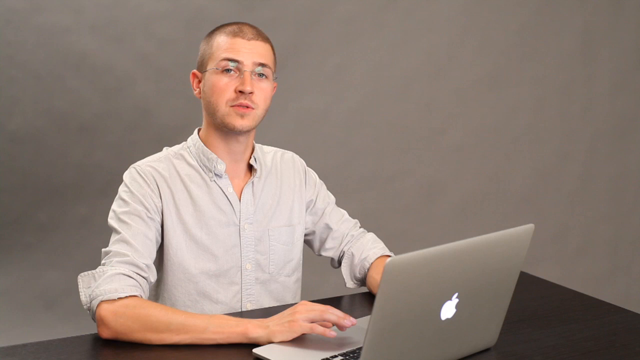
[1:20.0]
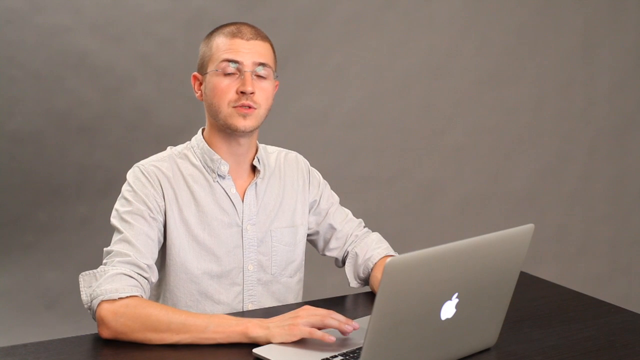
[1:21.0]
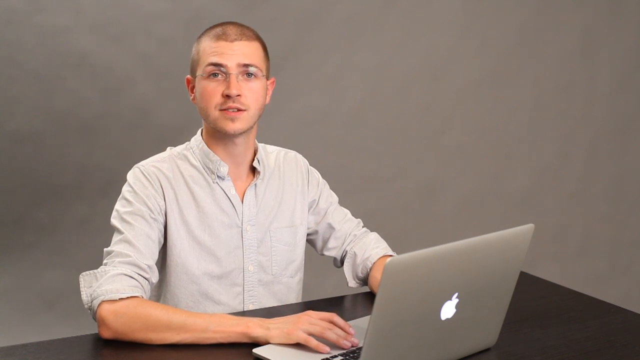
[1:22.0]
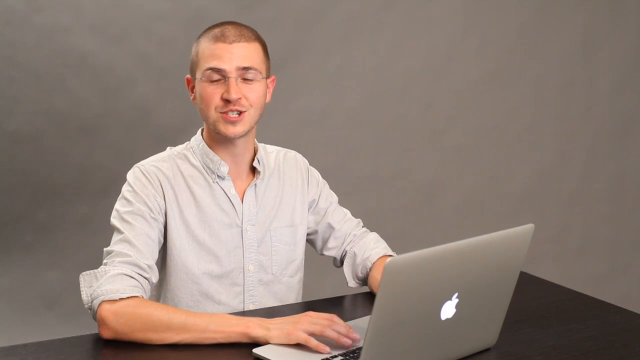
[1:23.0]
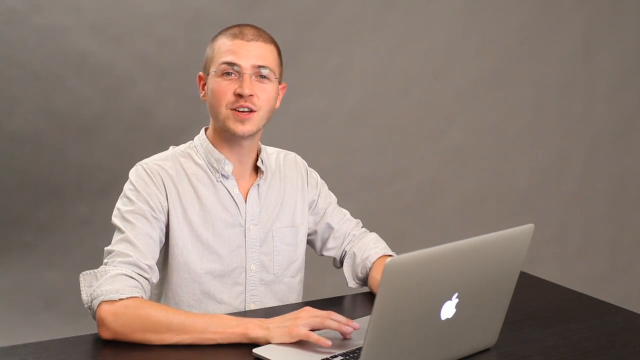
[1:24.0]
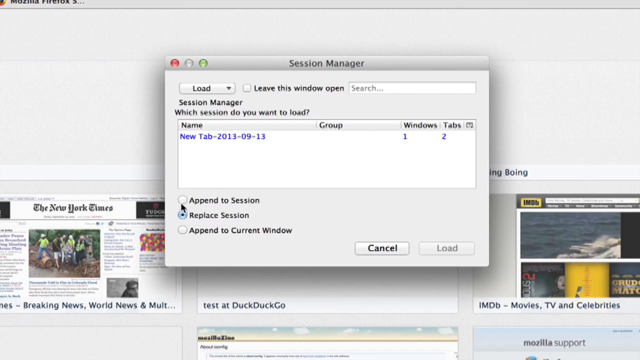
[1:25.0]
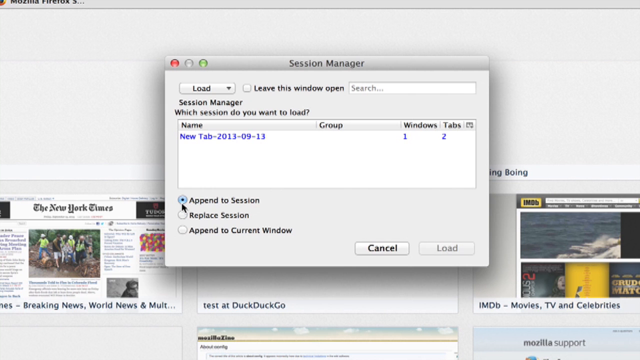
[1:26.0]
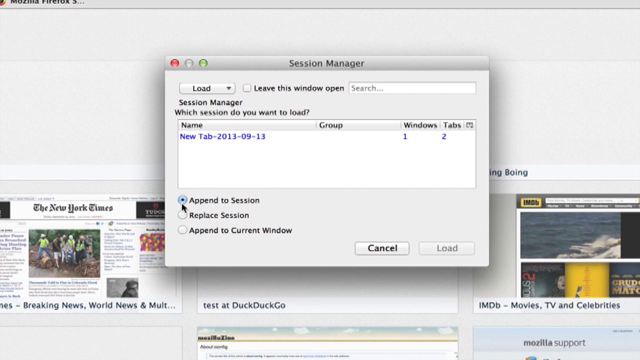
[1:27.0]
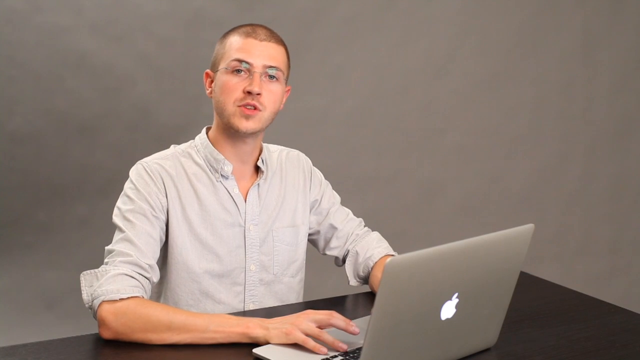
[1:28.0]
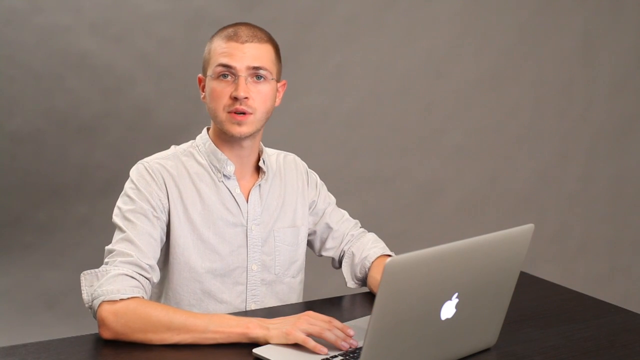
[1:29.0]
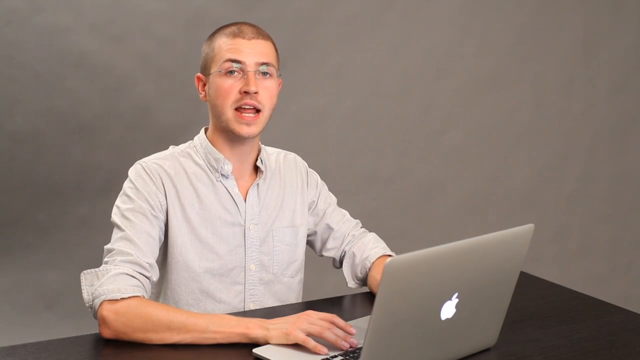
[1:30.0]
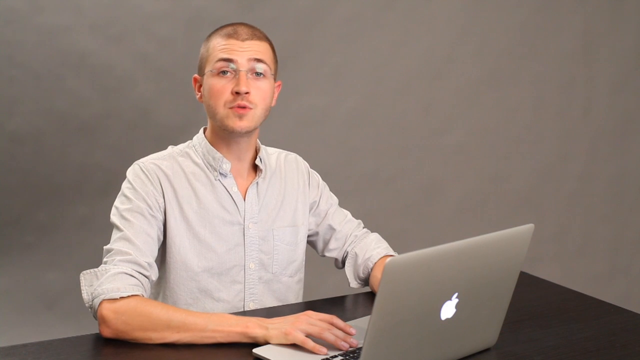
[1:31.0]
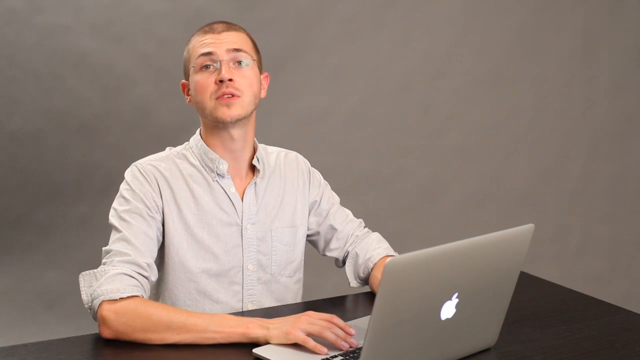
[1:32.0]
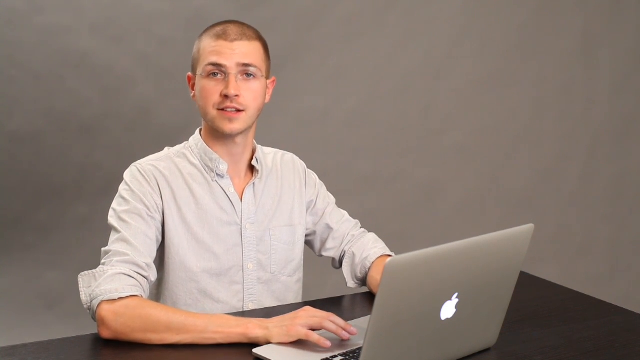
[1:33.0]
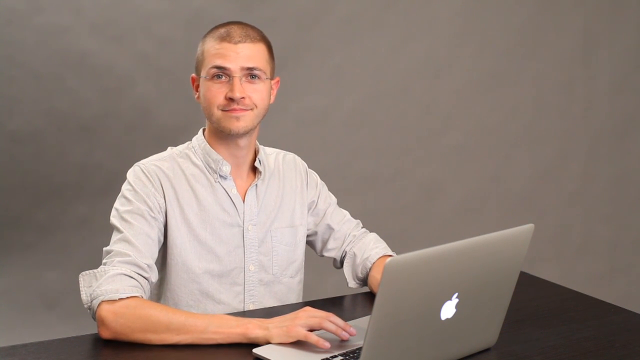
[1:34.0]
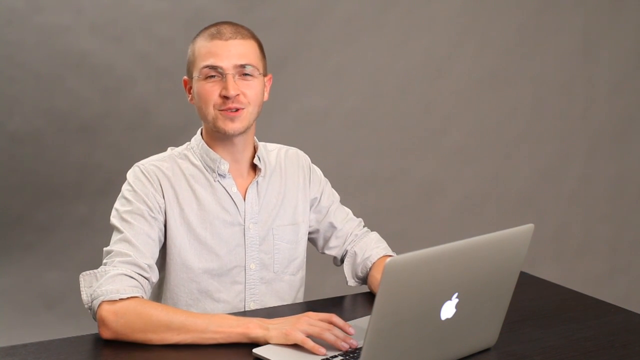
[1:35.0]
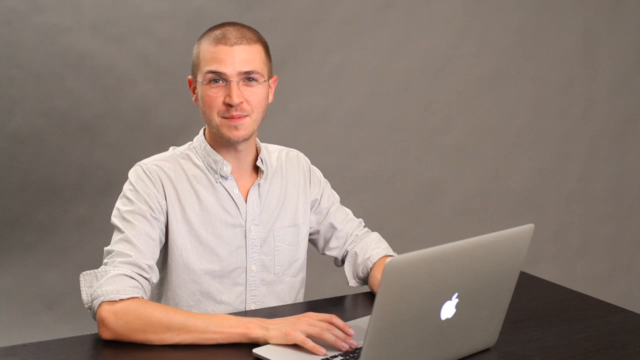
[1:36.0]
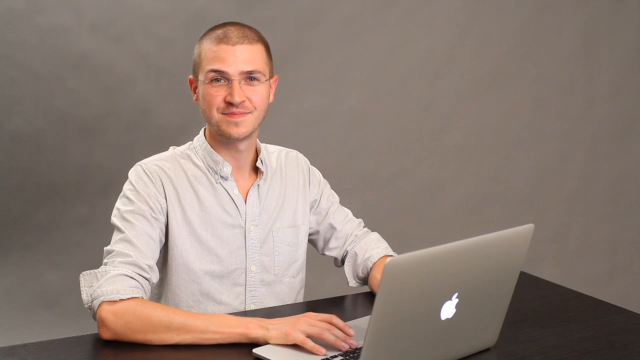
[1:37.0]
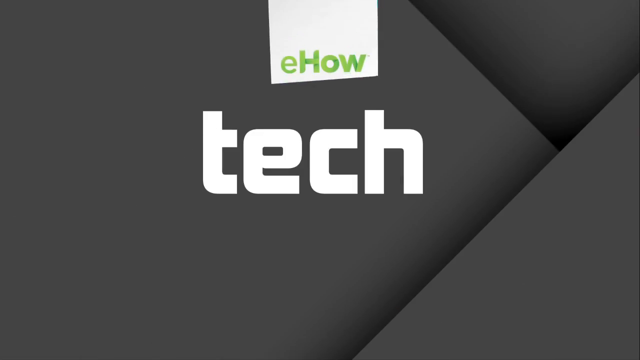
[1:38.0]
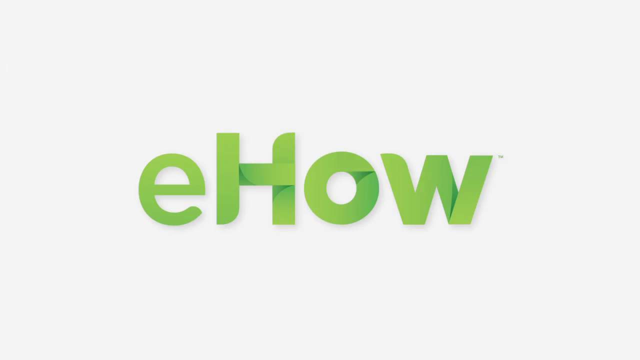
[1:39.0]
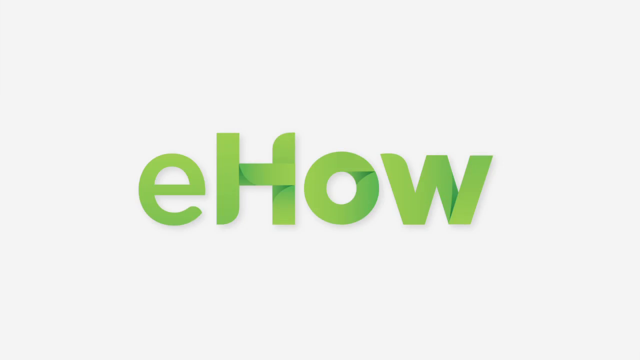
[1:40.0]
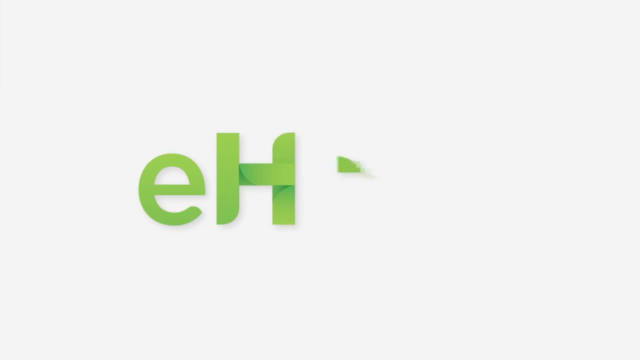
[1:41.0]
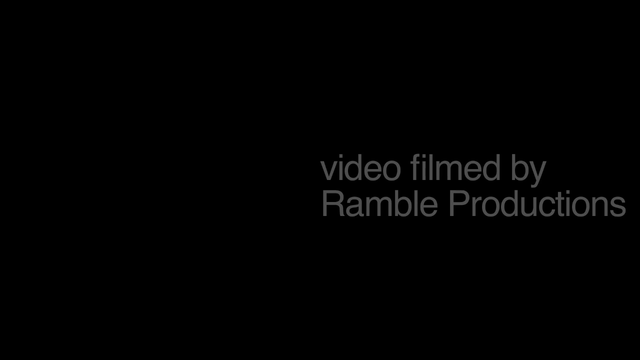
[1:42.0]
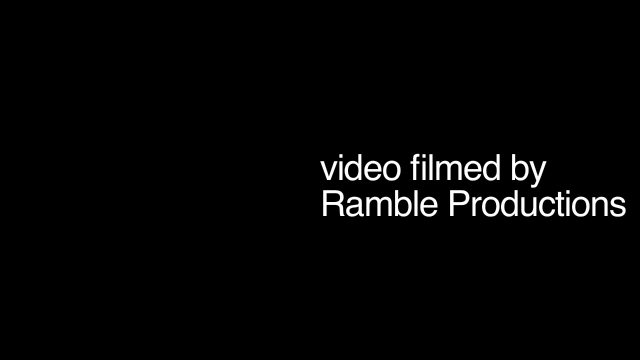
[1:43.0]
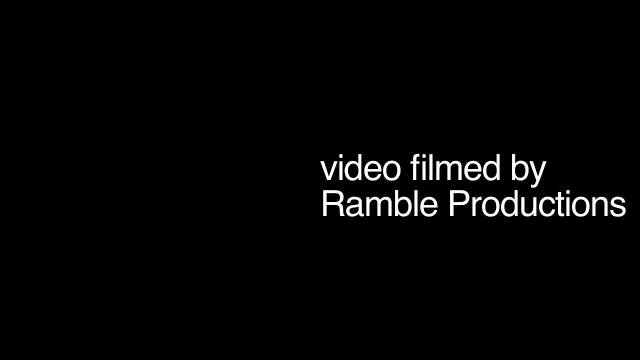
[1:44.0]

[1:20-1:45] The man speaks to the camera again with his hands still on the keyboard, looks slightly to the left, looks back at the camera, and smiles a bit. Back in the screen recording, the user chooses the option to append to the session instead. The man is then seen again, still speaking to the camera, with his fingers slightly on the trackpad, smiling with his eyebrows a bit raised. The concluding screen shows the grey panels with the white text TECH again, then flashes the eHow symbol on the white background, and the animation plays backwards so that the eHow word is erased. The video ends on a black screen with white text on the right-hand side reading "video filmed by Rambo Productions."